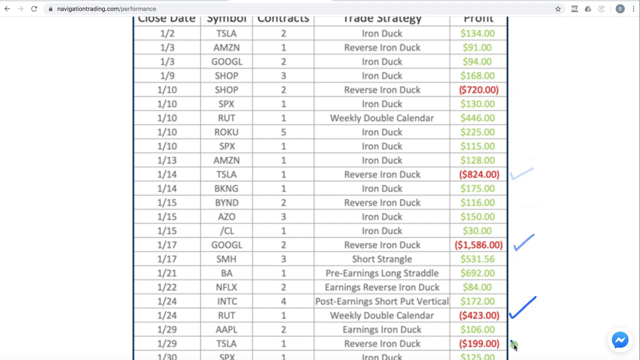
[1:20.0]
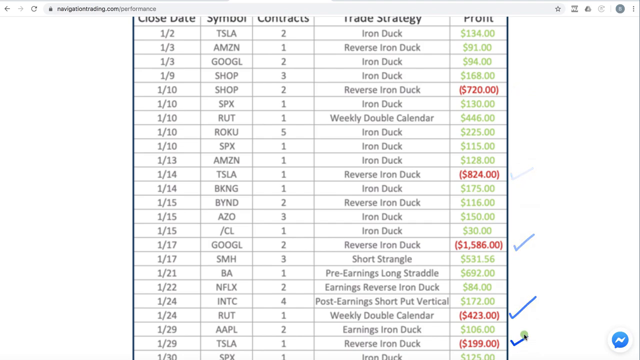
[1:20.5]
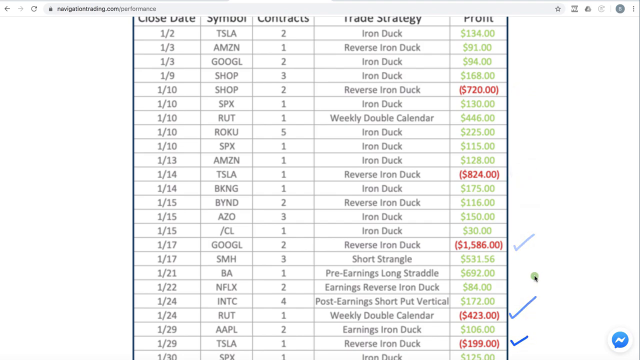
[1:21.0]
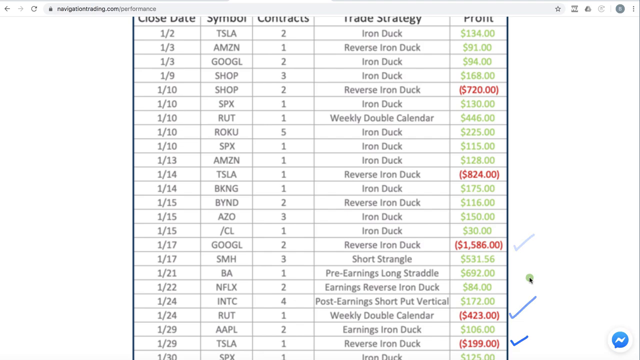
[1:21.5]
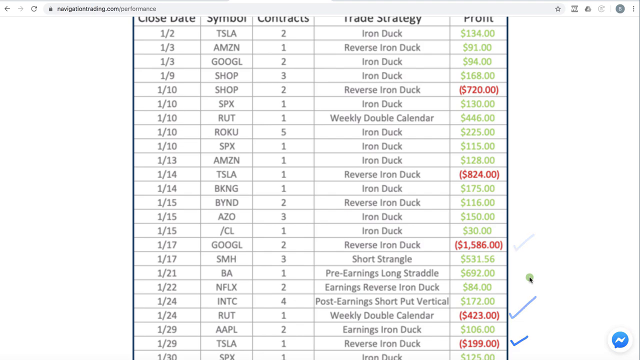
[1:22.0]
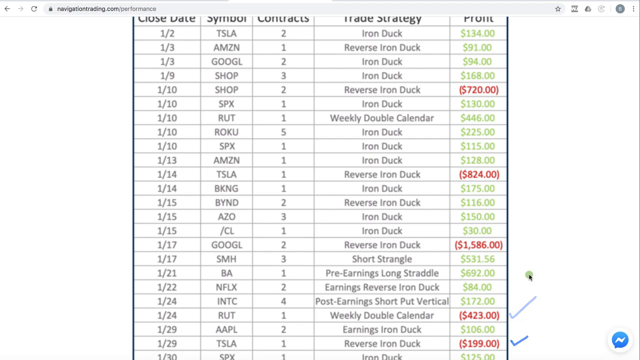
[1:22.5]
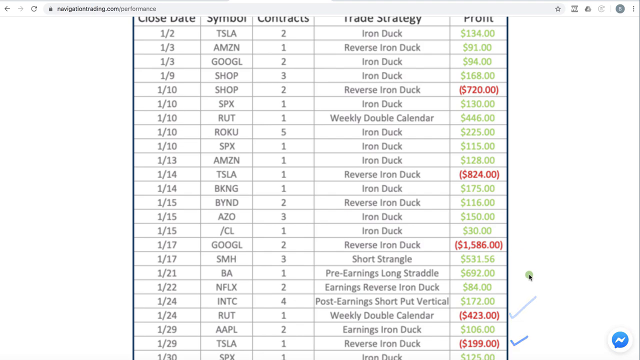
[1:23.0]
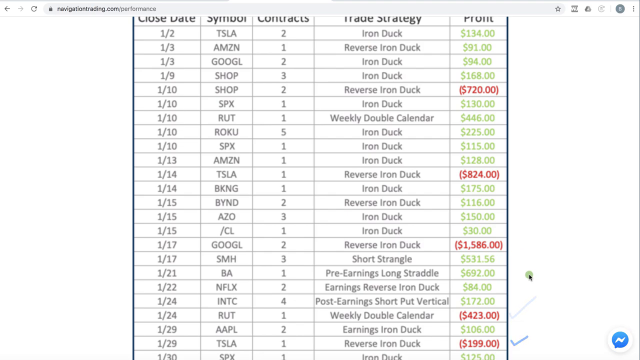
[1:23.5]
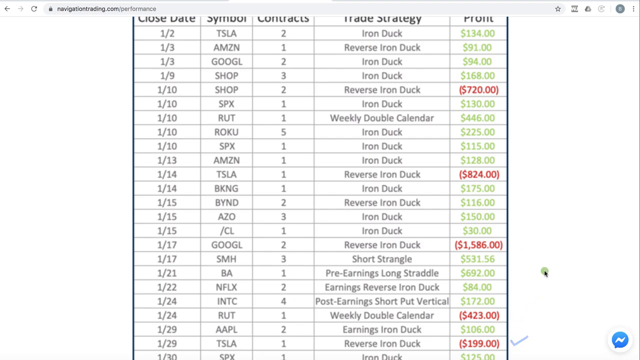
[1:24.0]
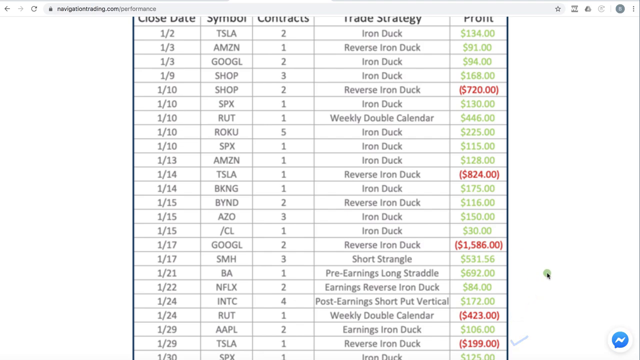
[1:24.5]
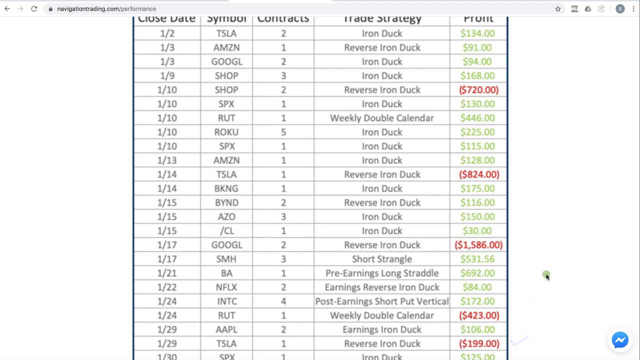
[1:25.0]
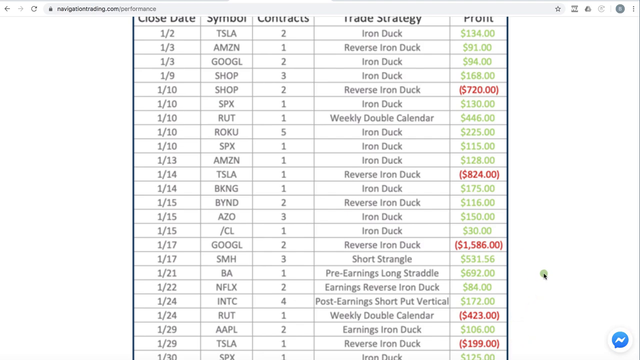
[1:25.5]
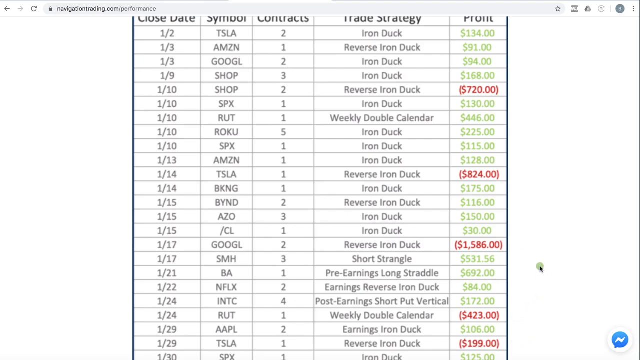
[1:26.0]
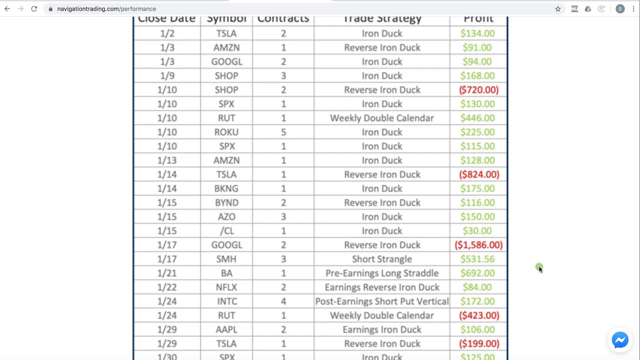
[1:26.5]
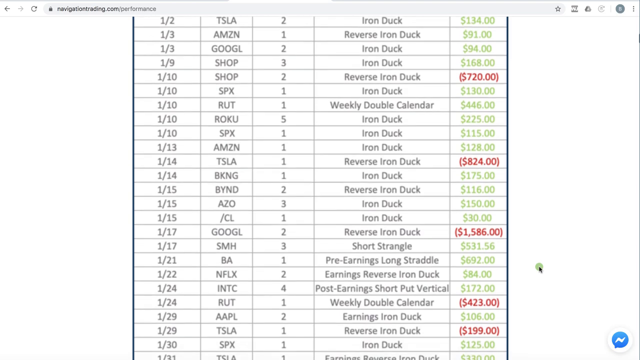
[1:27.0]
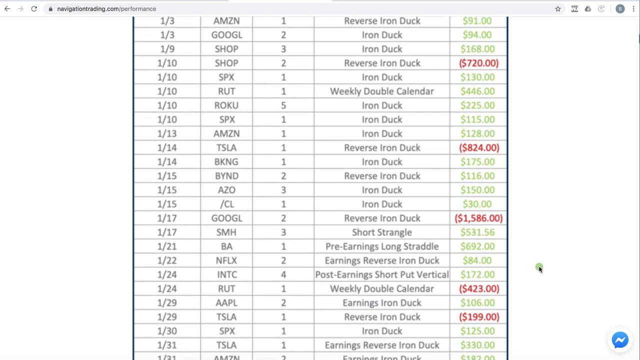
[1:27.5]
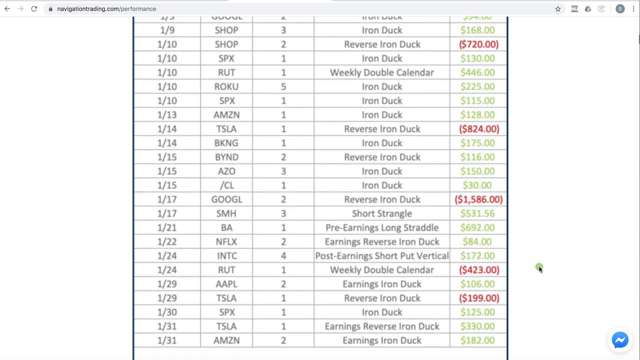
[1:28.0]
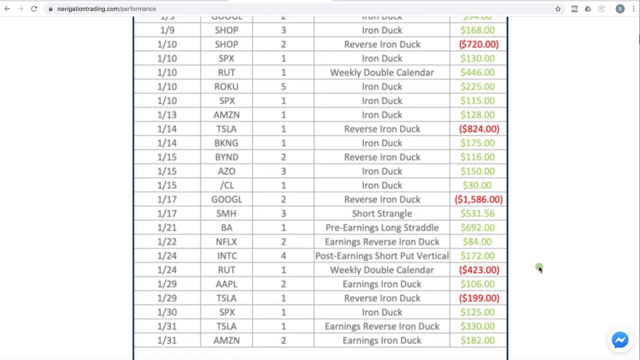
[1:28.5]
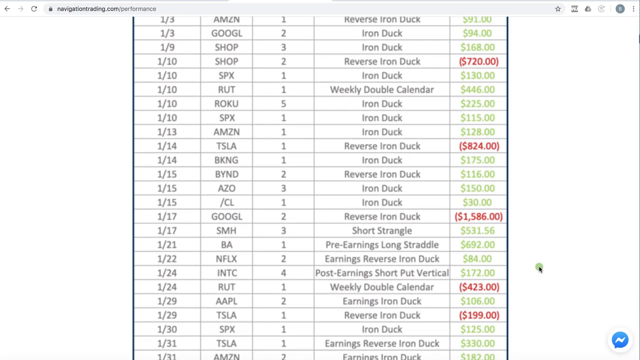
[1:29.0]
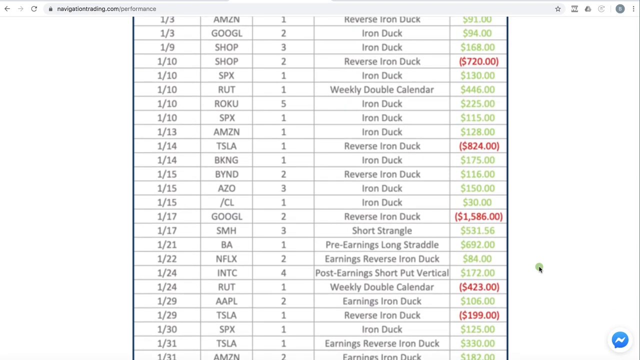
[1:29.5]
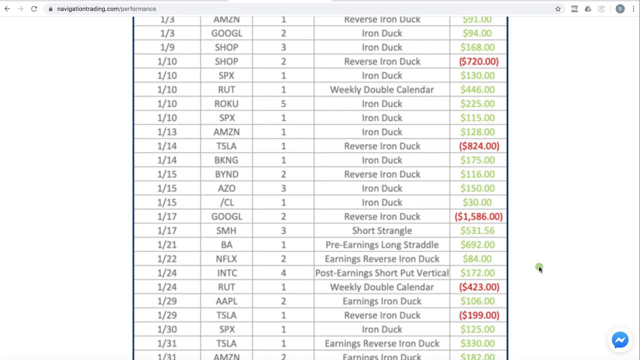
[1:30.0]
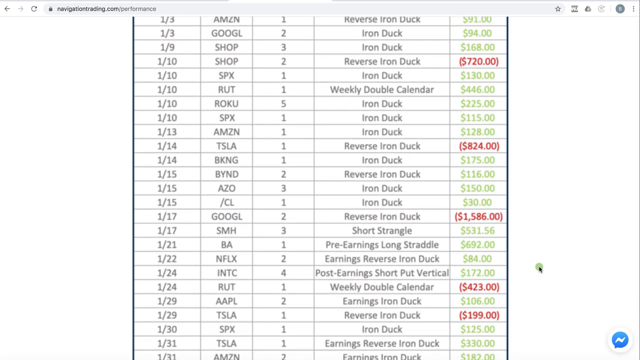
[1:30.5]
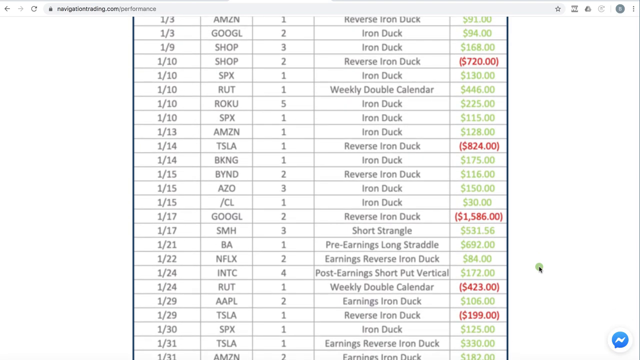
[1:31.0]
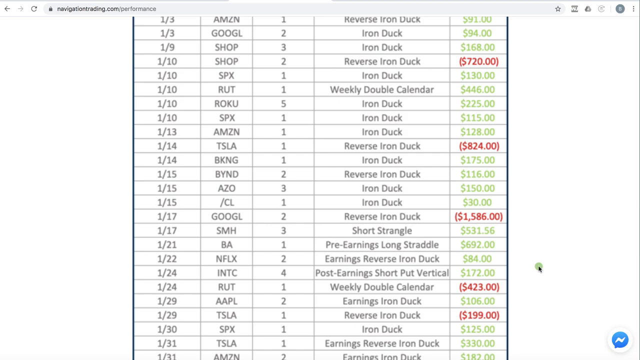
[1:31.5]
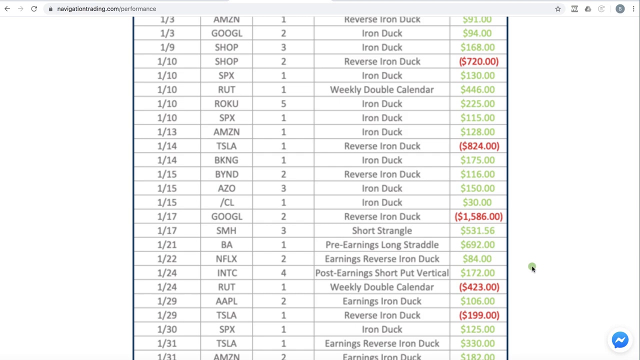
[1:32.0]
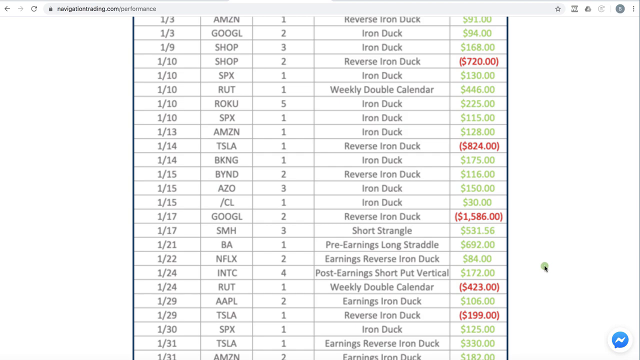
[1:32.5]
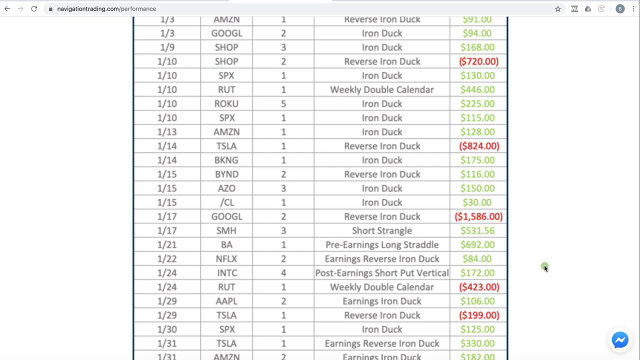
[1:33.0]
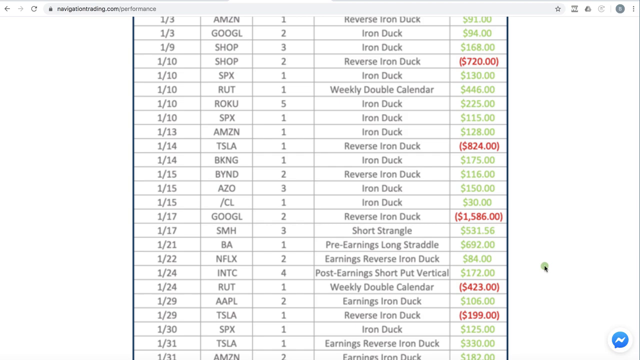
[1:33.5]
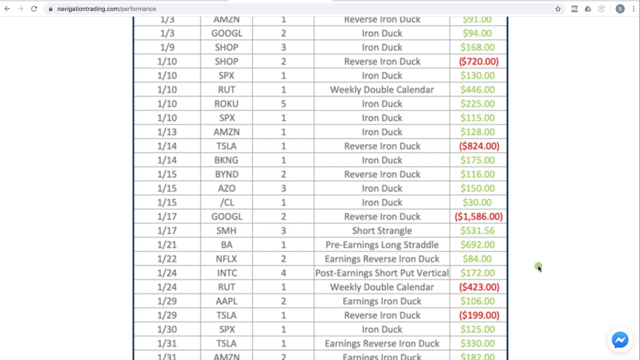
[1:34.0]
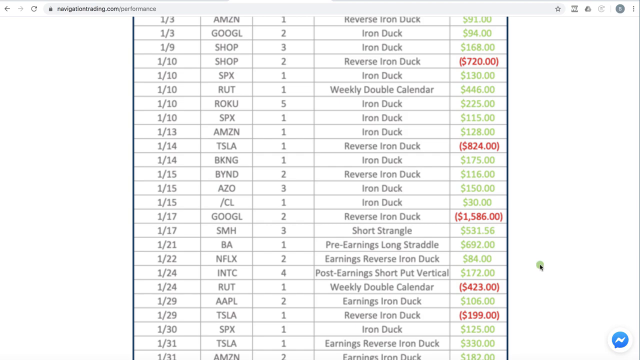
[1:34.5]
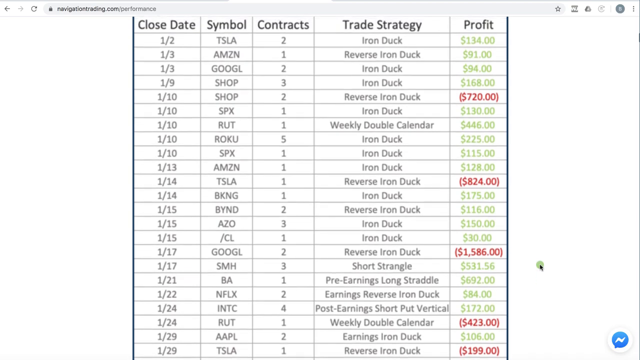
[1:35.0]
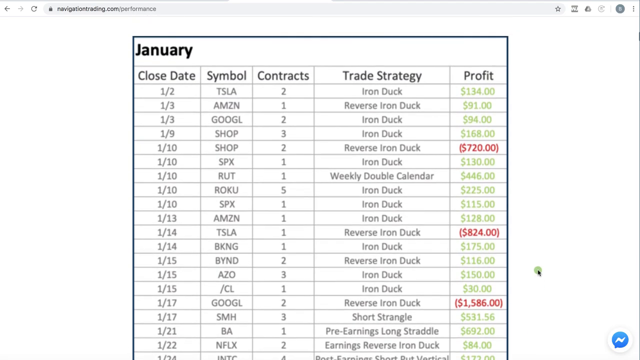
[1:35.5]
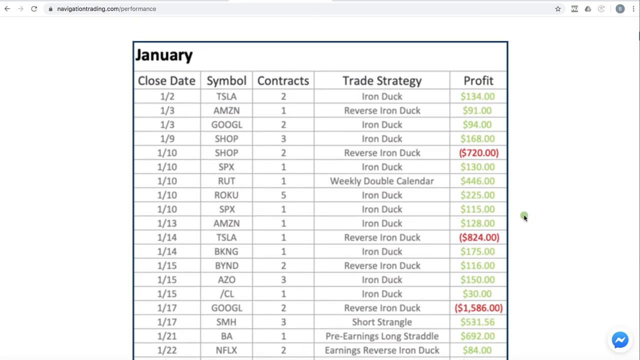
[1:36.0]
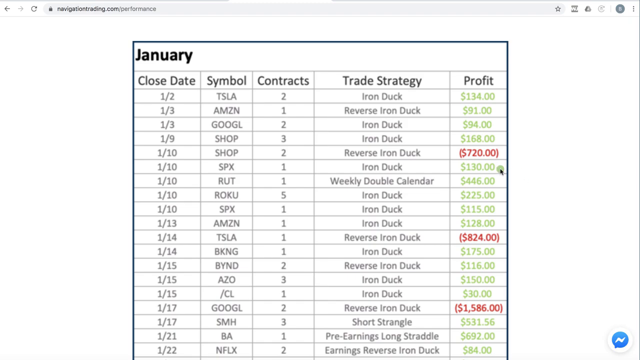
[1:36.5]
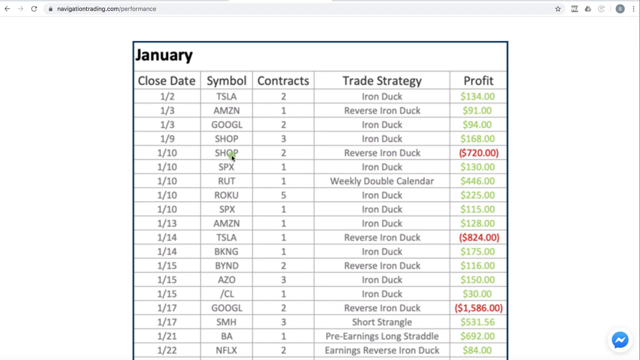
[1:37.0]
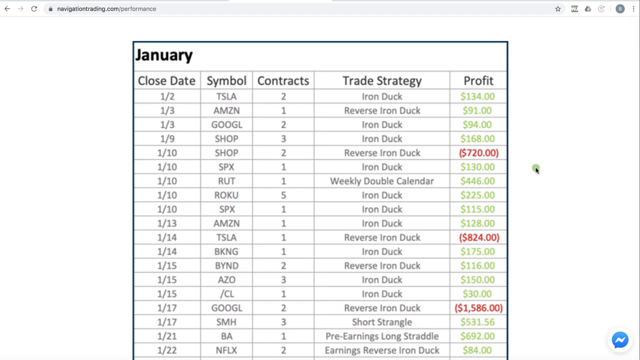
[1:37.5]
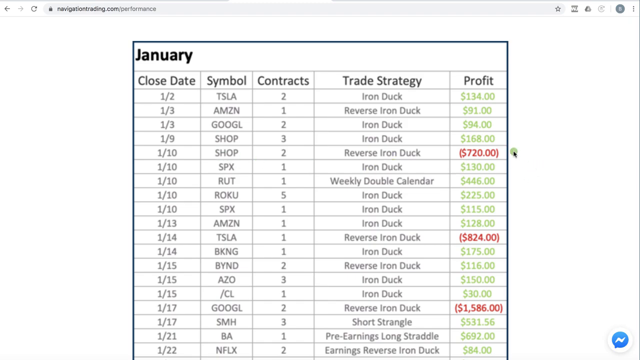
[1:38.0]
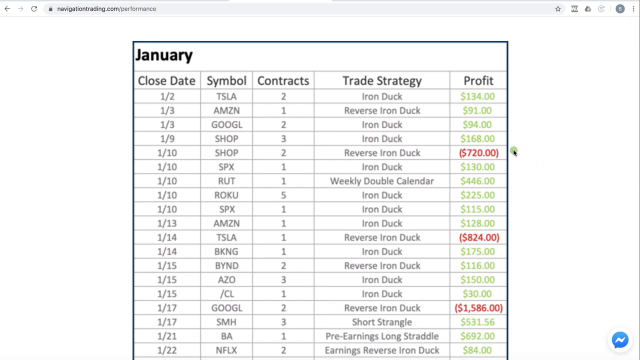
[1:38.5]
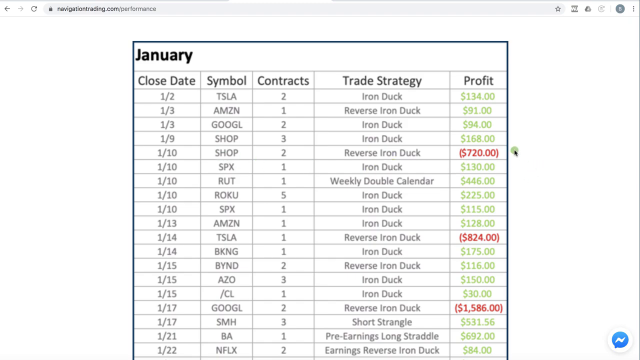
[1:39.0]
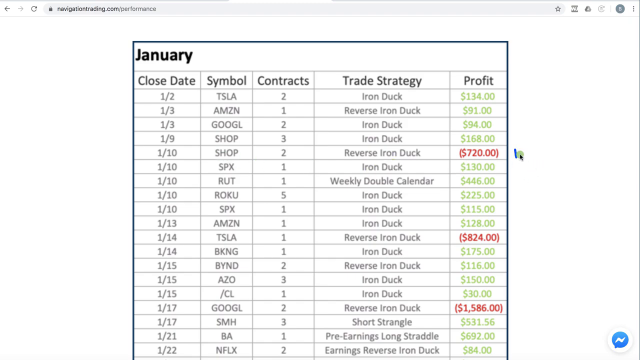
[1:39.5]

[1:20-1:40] Areas such as iron dock and a calendar show profits and negatives in greens and reds. There are columns for profits, trades, contracts and symbols, and iron dock versus iron dock trades are shown with different stocks and dates. The profit figures are either green or red depending on whether they are positive or negative.